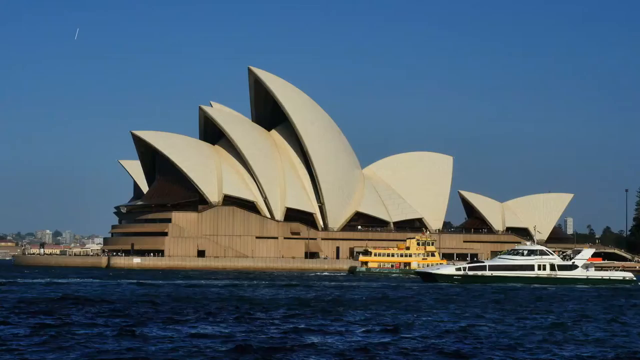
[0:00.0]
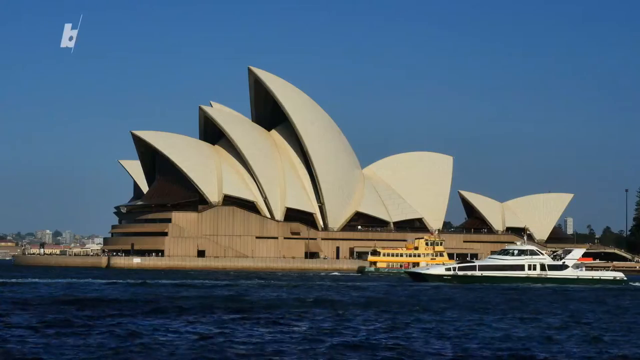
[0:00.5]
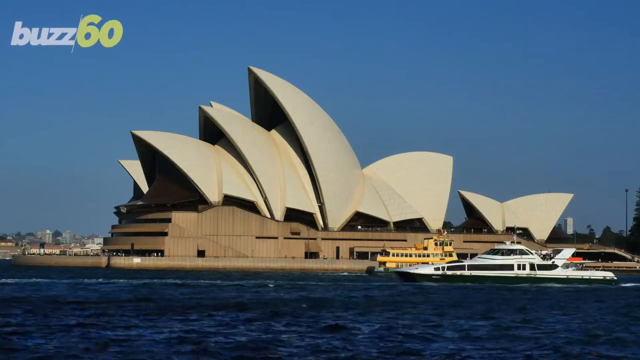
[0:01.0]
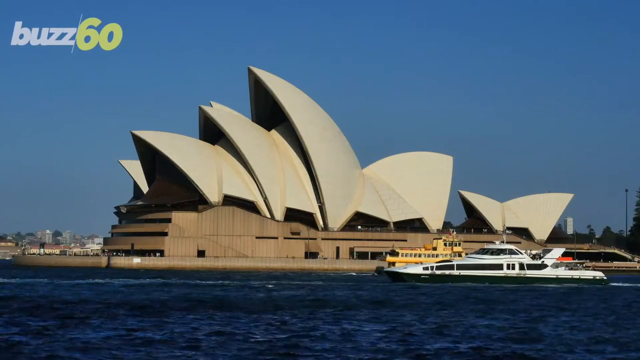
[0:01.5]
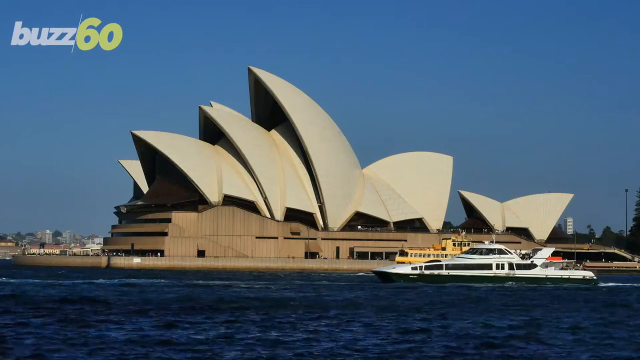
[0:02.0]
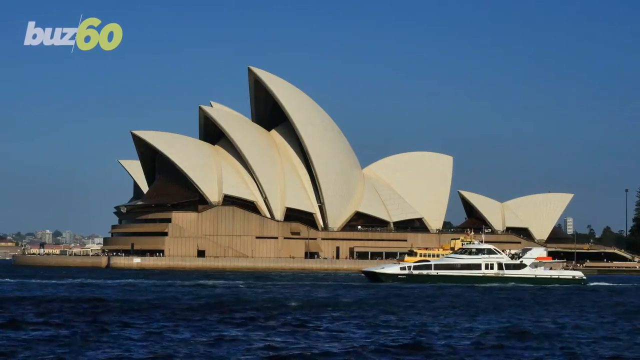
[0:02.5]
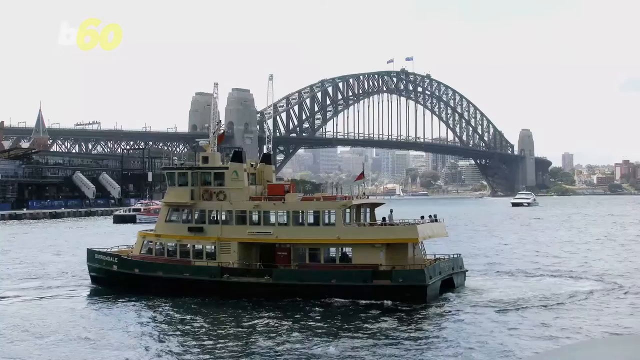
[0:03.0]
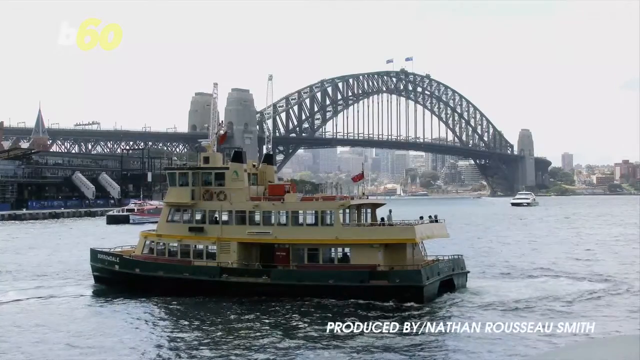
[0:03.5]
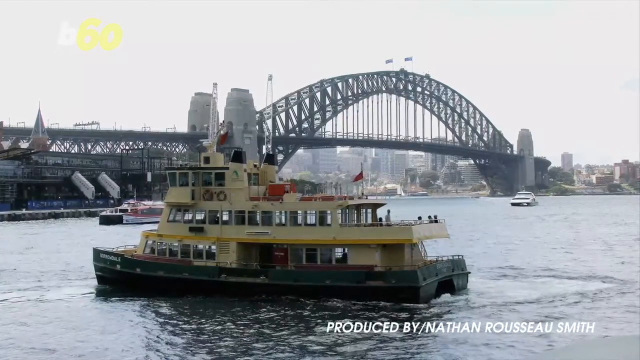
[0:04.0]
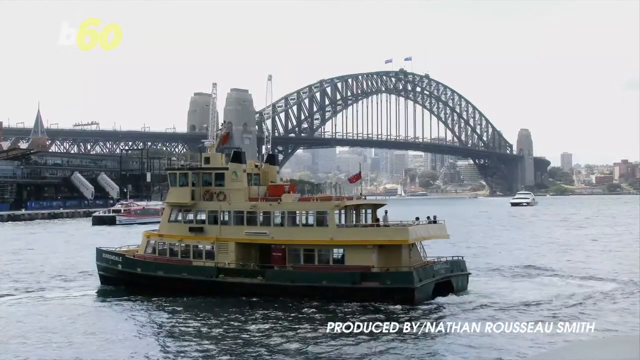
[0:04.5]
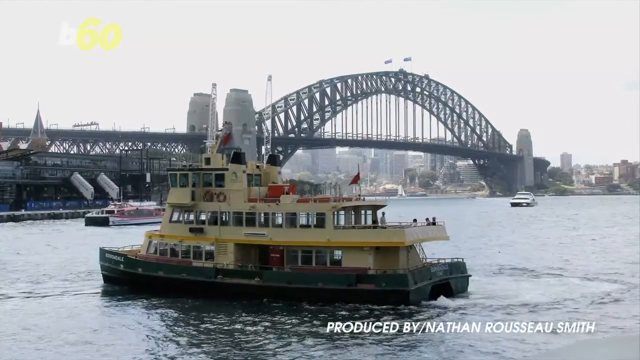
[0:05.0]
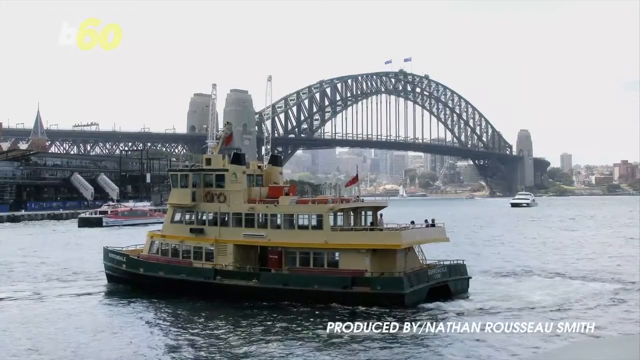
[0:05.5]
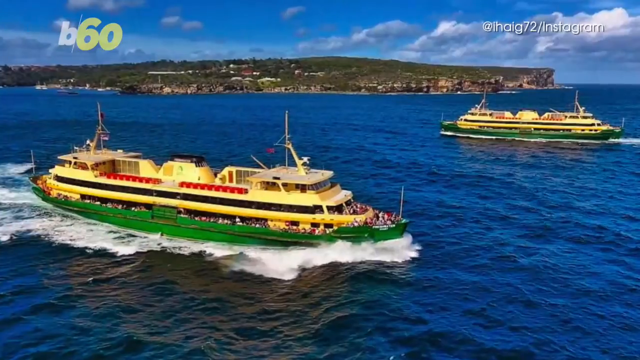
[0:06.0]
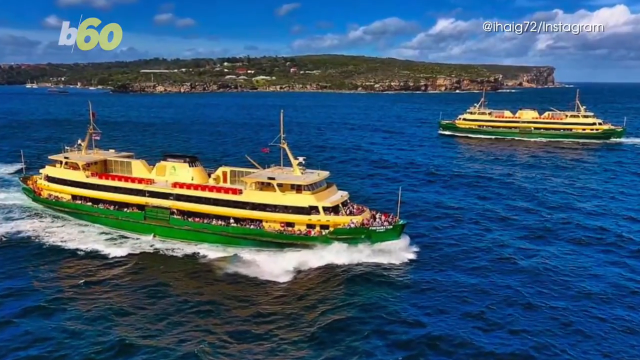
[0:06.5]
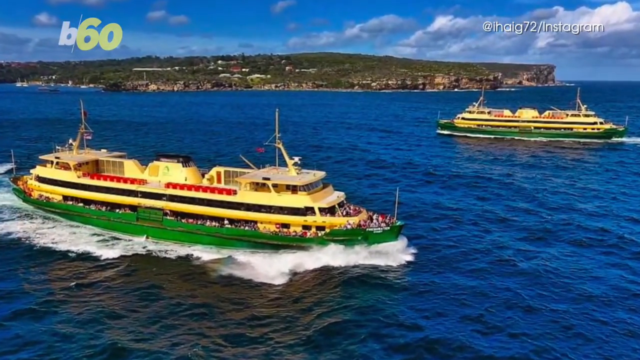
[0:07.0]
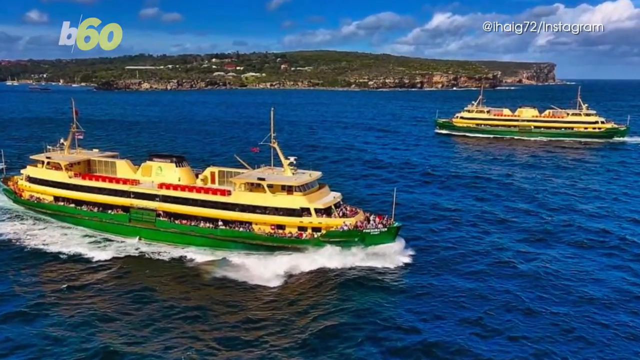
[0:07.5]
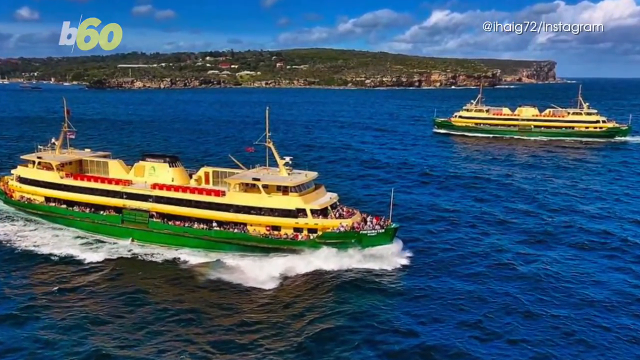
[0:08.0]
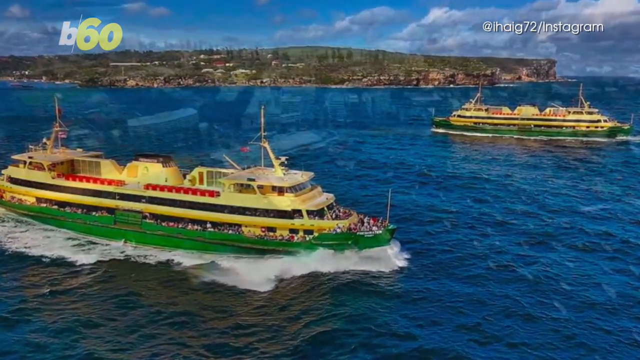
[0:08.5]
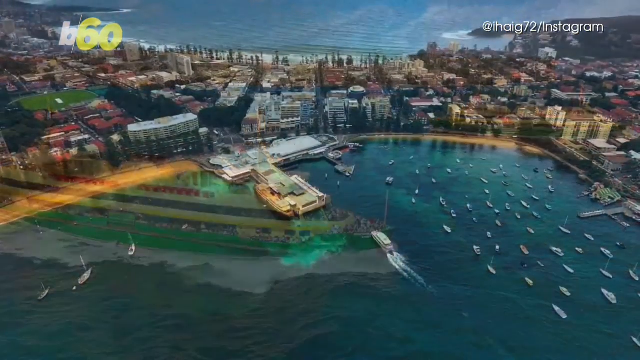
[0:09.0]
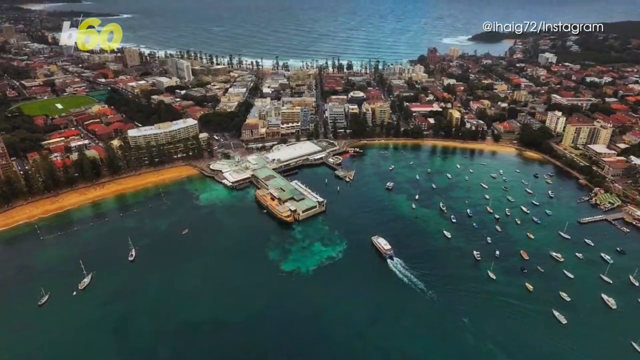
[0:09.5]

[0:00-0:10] The Sydney Opera House stands on the banks of Sydney Harbour, its roof looking like white ship sails. Dark water fills the foreground, and ships and boats sail past. On the left-hand side is the TV station logo "Buzz 60". The scene changes to a close-up of a tugboat or ferry turning around in the water, with an arched bridge in the background going across from one bank to the other. White text at the bottom of the image reads "produced by Nathan Rousseau Smith." Next comes a bright, colourful image of the dark navy blue water of Sydney Harbour going out to sea, where two ferries pass, one coming and one going. They are packed with people, probably tourists, and are painted bright yellow with bright green hulls. The shot zooms in and fades to an aerial view of the harbour with many boats anchored. The water here is a striking green-turquoise colour, and there is a lot of built-up area in the background. The top right shows the address "ihaig72.com/Instagram".